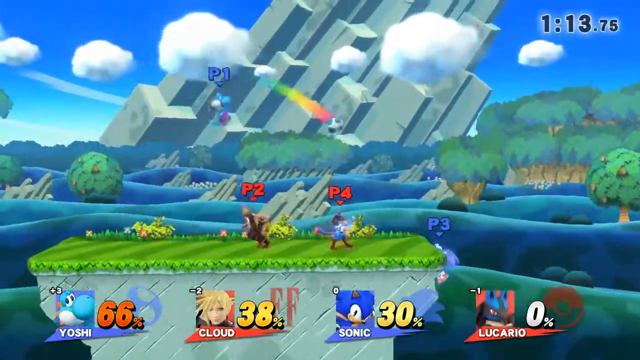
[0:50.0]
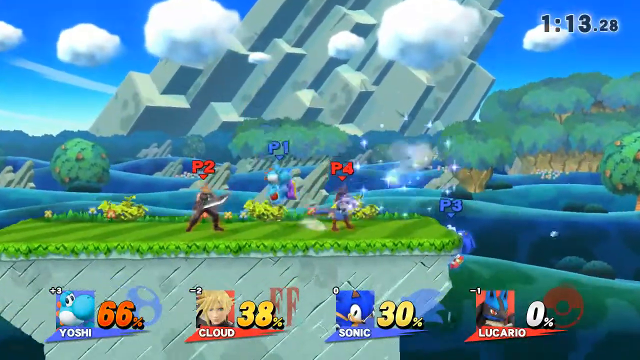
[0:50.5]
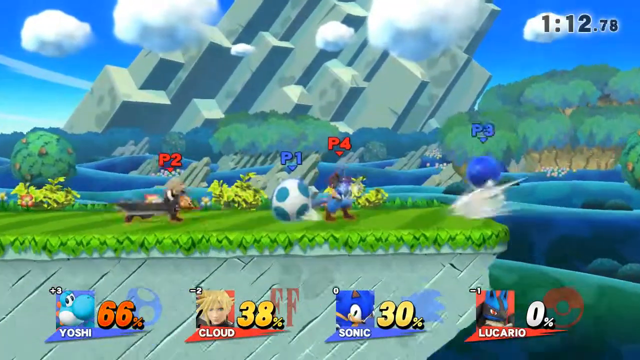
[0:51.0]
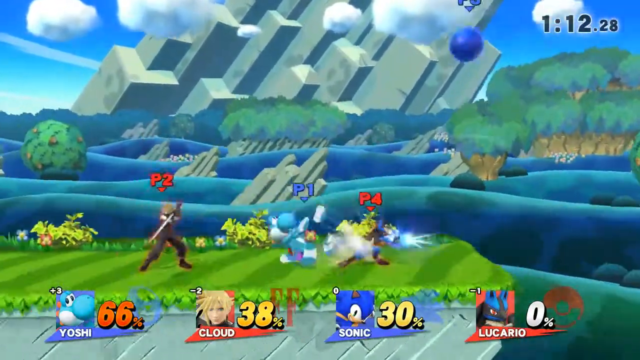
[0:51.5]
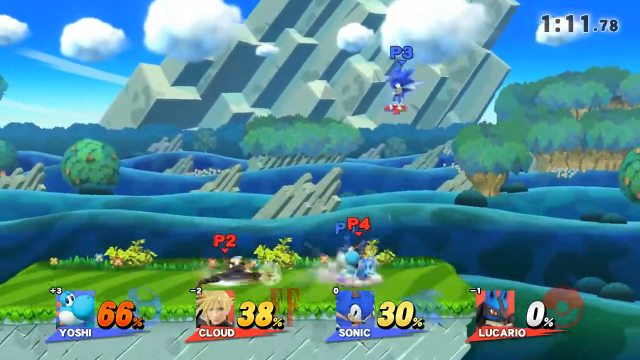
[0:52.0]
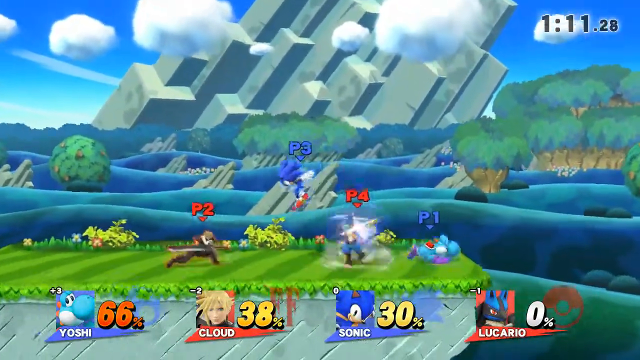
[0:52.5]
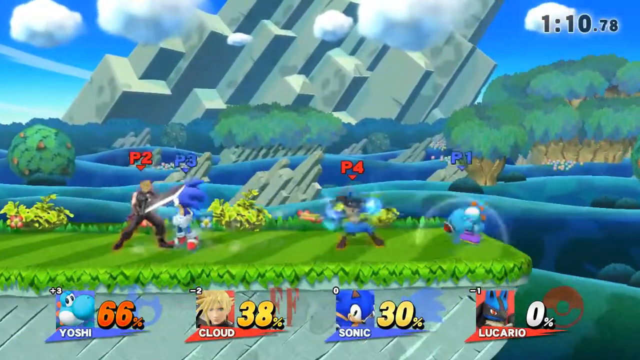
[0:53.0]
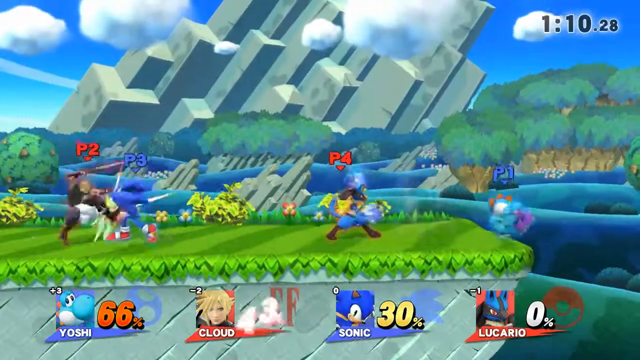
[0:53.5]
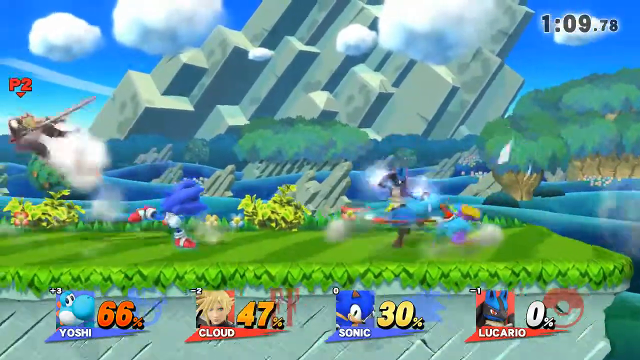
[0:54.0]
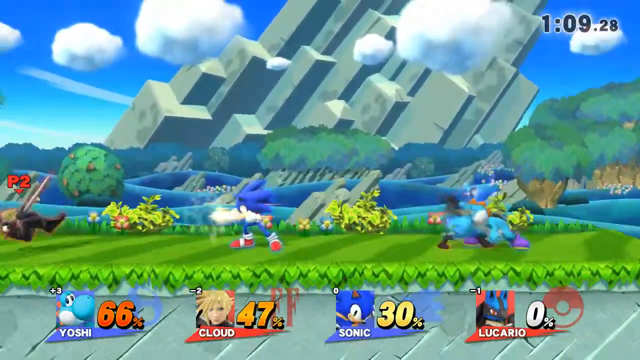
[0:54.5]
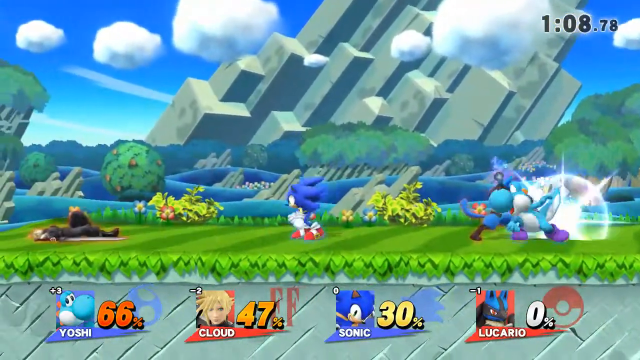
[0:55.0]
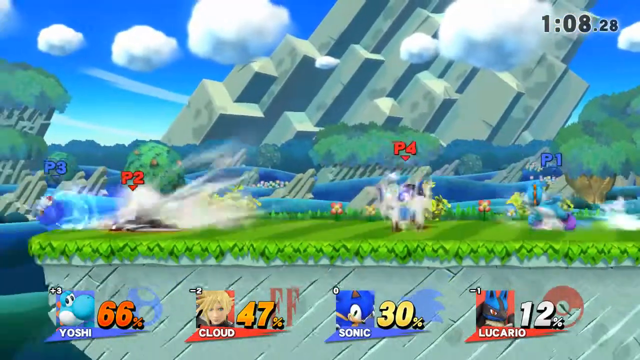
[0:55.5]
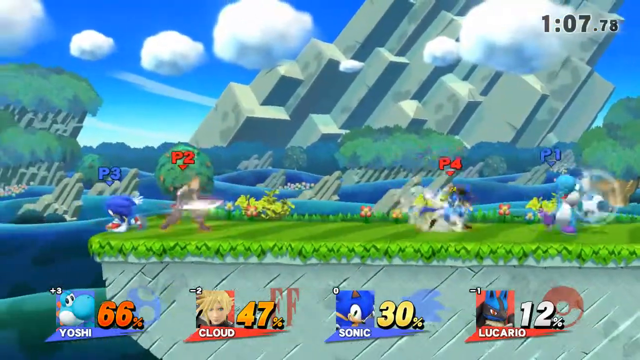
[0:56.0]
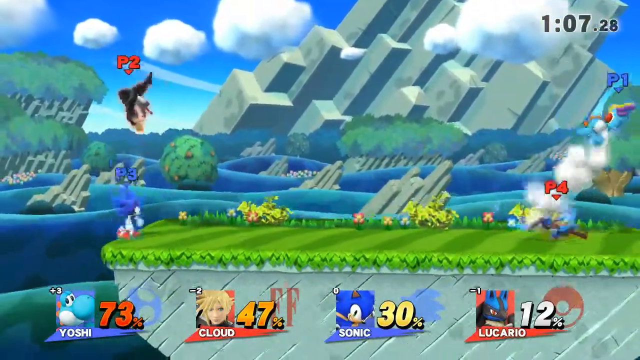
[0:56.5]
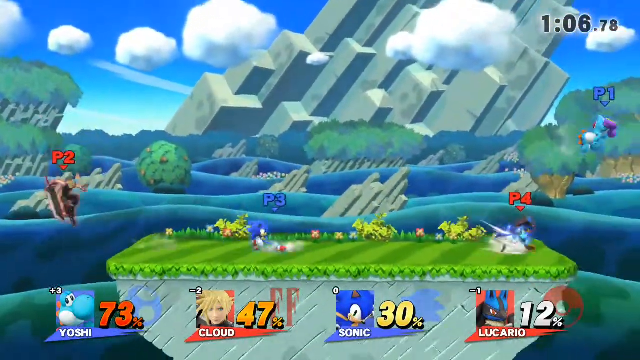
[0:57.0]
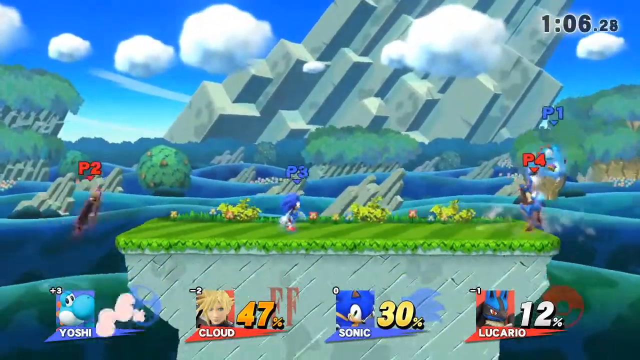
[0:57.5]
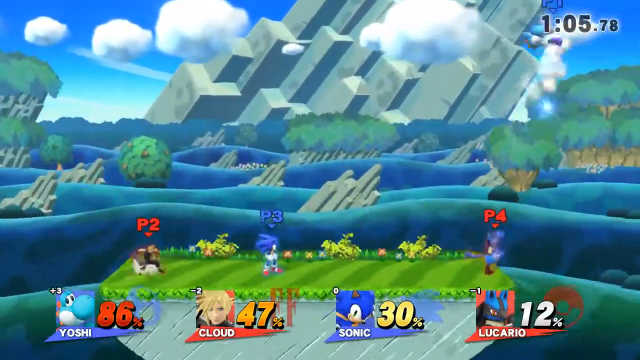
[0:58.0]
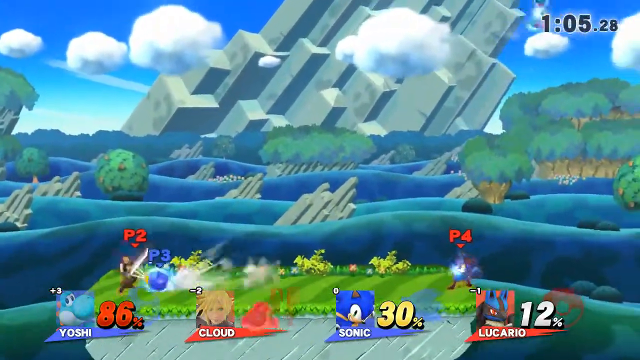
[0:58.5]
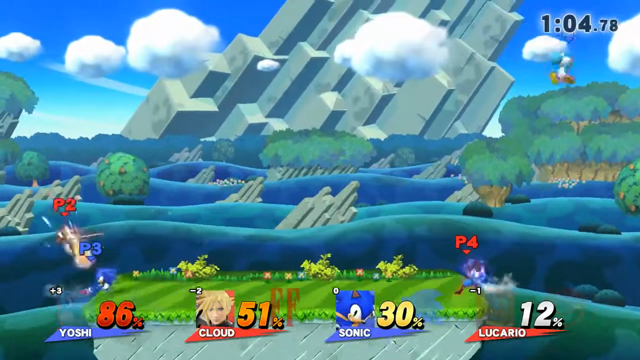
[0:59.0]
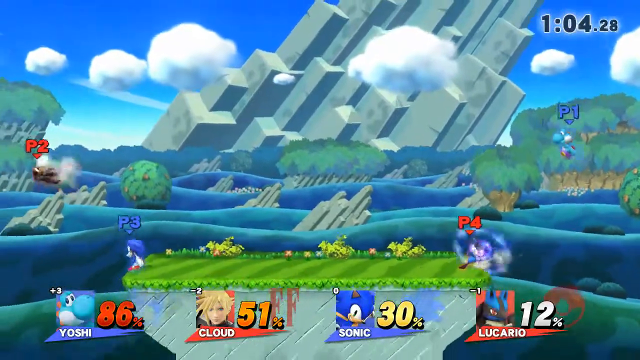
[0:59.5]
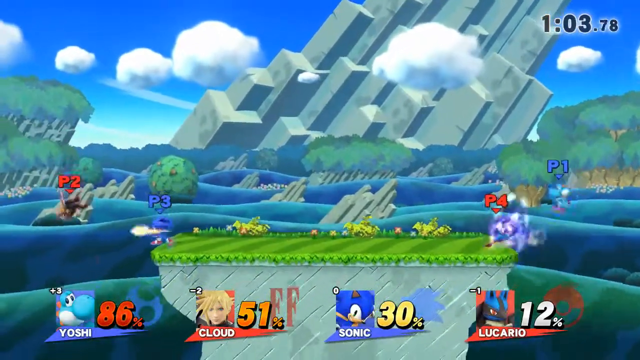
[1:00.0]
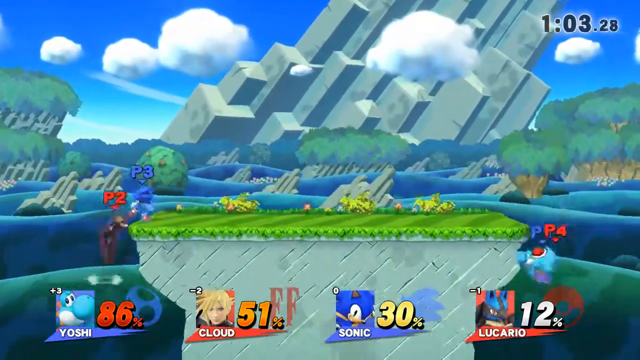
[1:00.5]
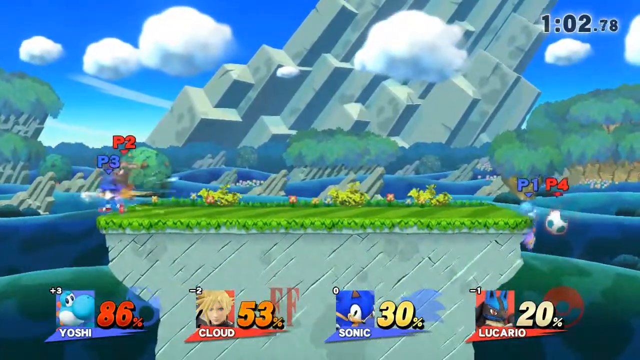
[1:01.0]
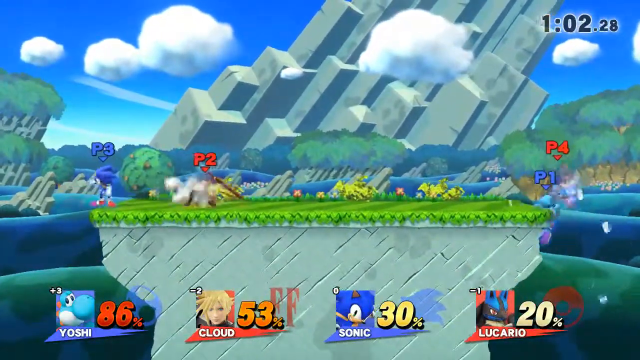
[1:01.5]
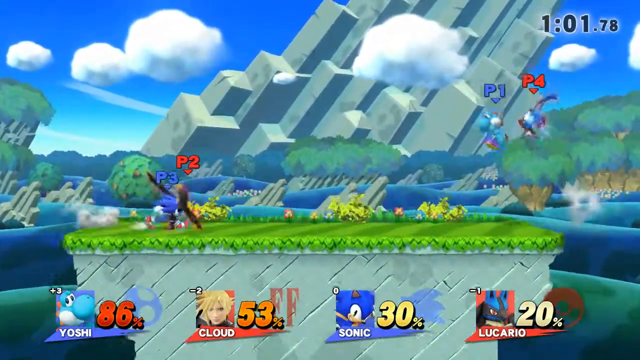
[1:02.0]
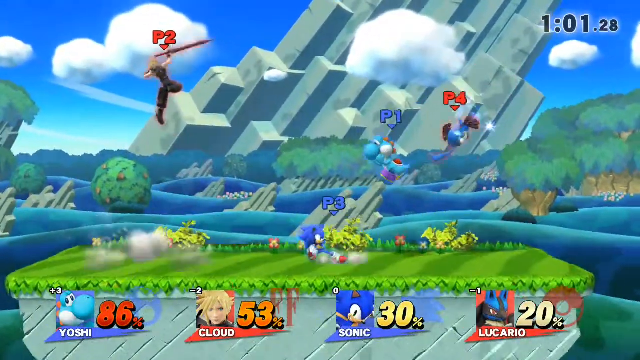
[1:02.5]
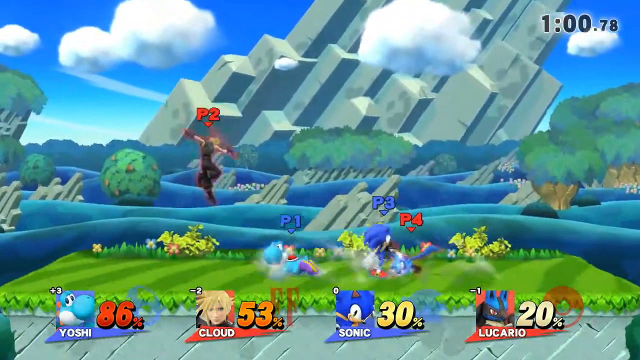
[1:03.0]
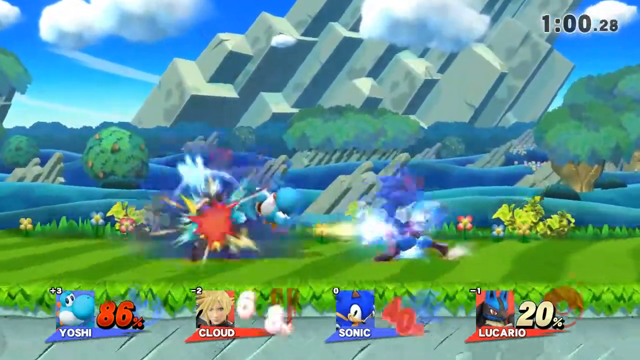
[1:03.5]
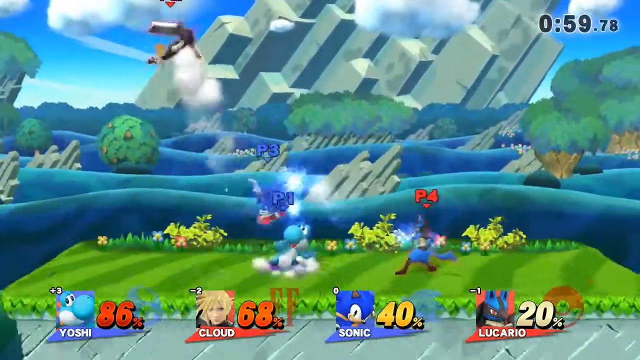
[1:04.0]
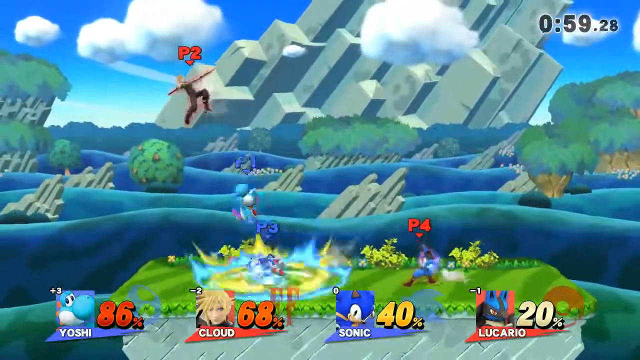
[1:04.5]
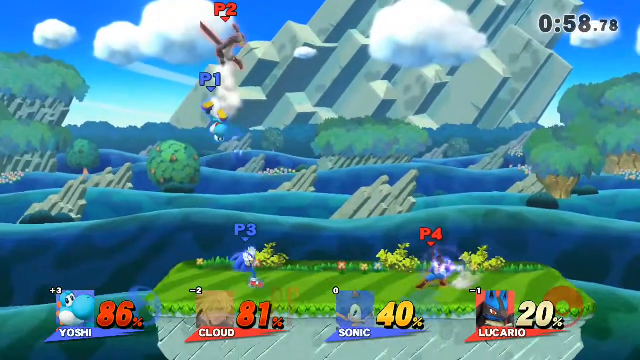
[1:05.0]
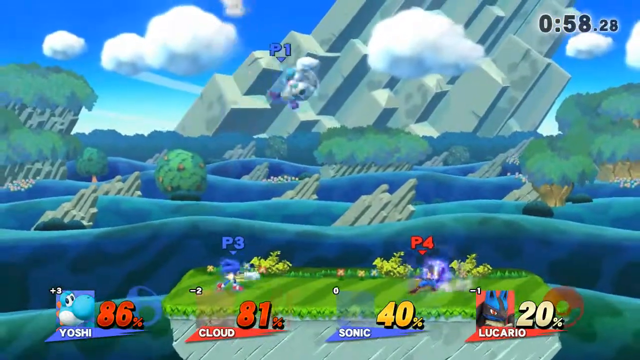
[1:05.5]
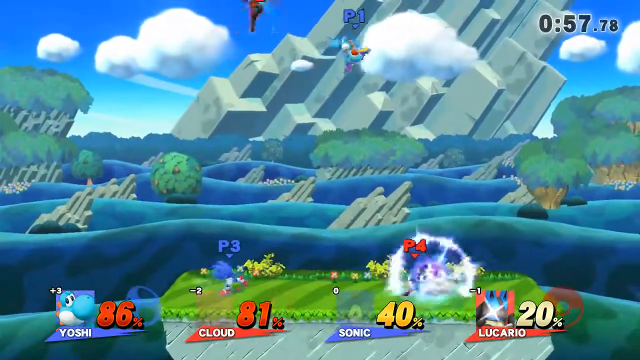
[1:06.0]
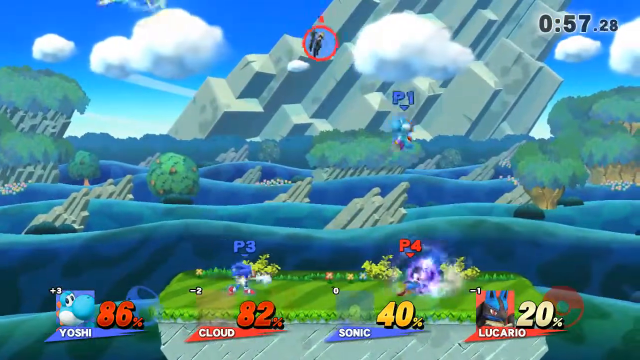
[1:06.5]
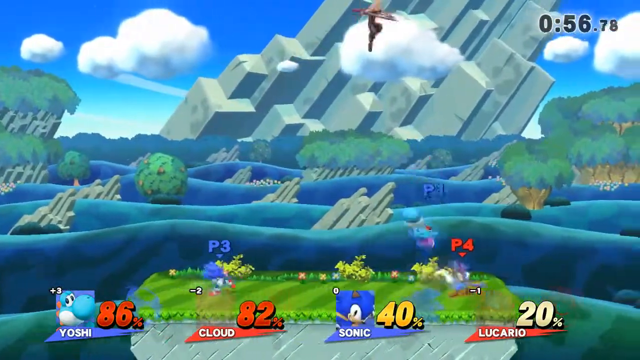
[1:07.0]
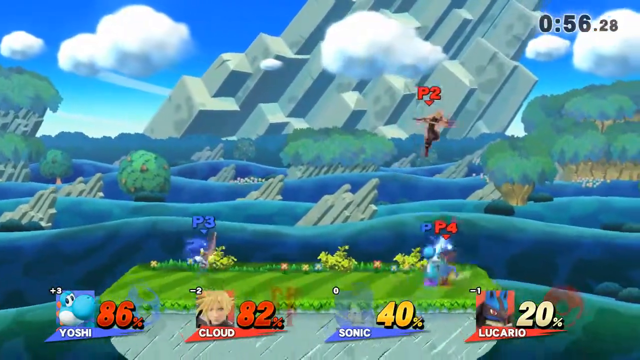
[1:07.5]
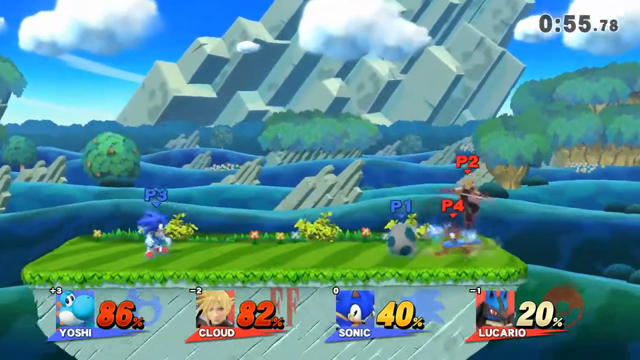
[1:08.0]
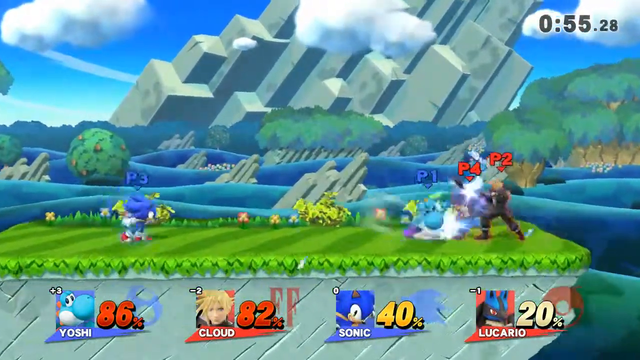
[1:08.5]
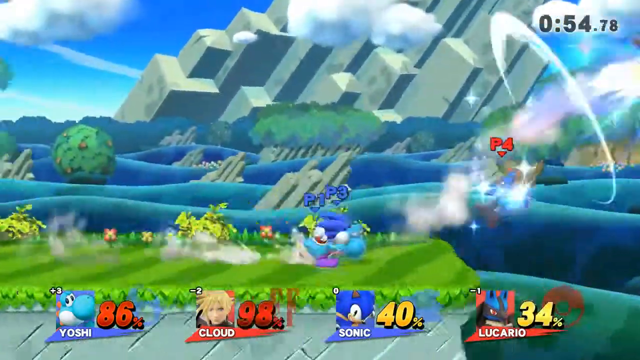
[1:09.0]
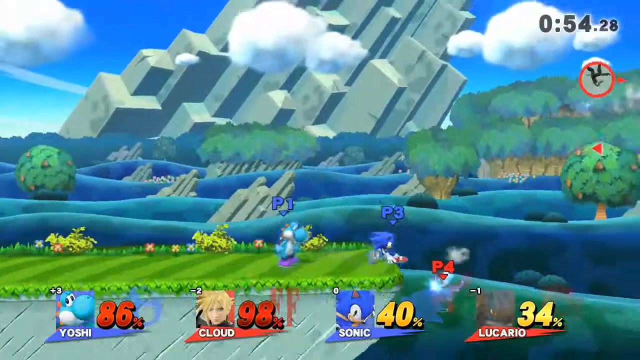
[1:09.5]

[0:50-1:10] With 1 minute 13 seconds left, Yoshi is at 66%, Cloud at 38%, Sonic at 30%, and Lucario at 0% after falling and coming back. Yoshi spins and turns into his little egg, which looks like a ball. When the characters twirl and spin, what look like little stars appear, sparkly and glittery, along with something that looks kind of like lightning bolts. By the end, Yoshi is at 86%, Cloud at 98%, Sonic at 40%, and Lucario at 34%.